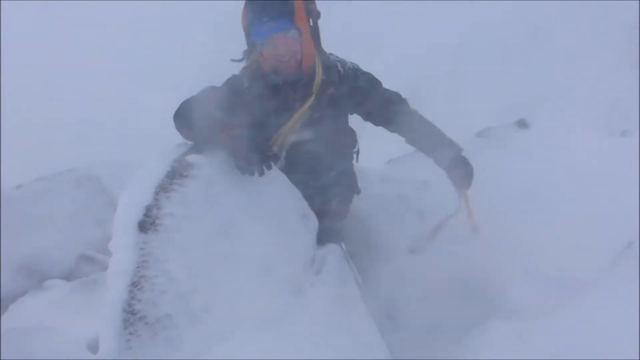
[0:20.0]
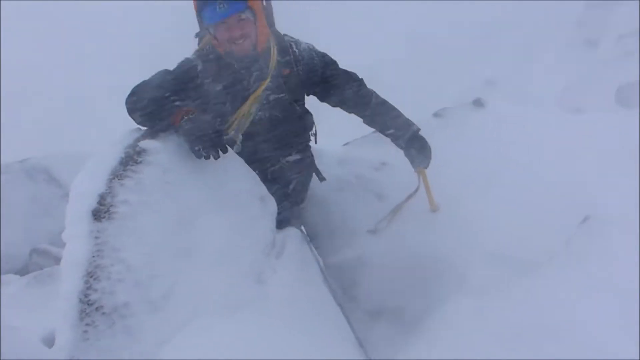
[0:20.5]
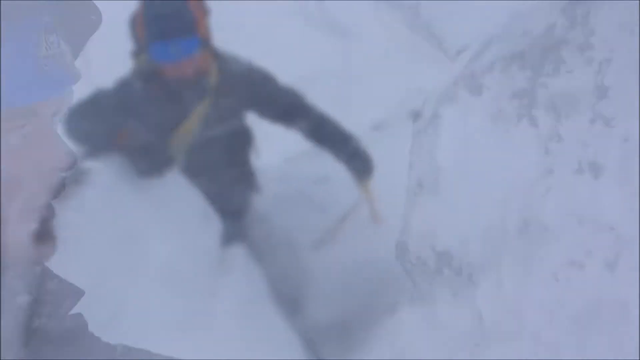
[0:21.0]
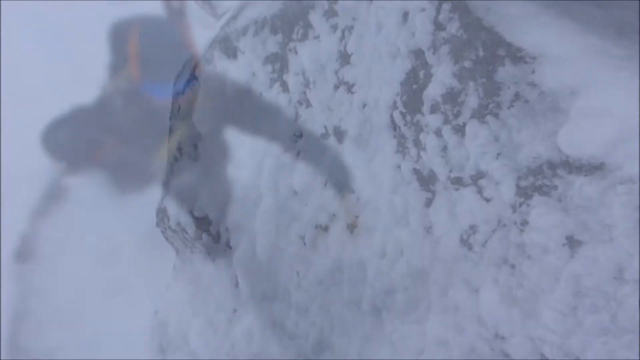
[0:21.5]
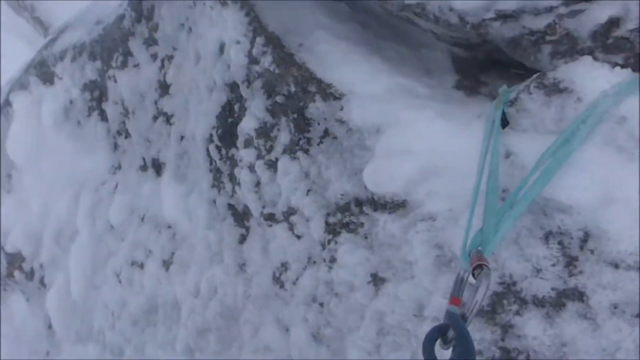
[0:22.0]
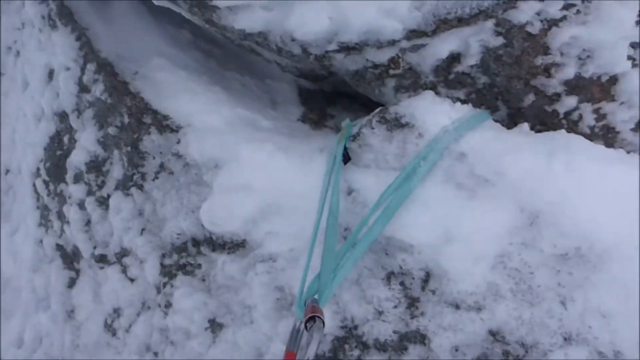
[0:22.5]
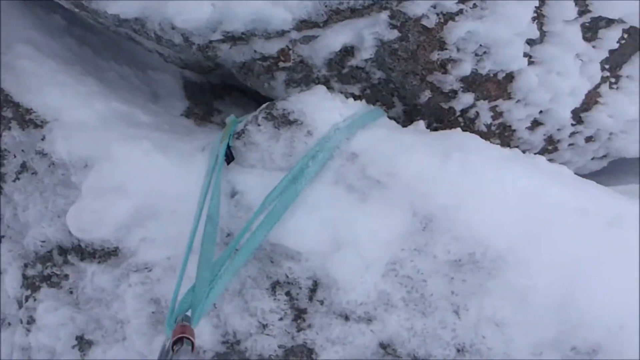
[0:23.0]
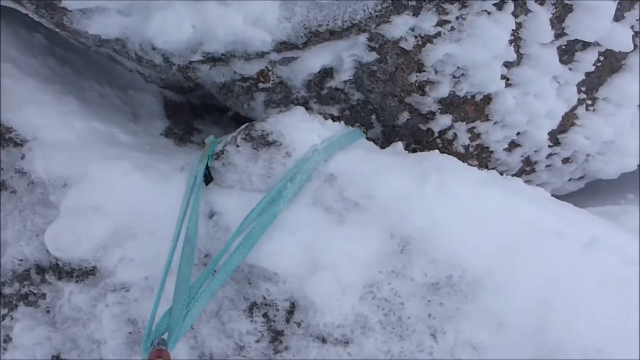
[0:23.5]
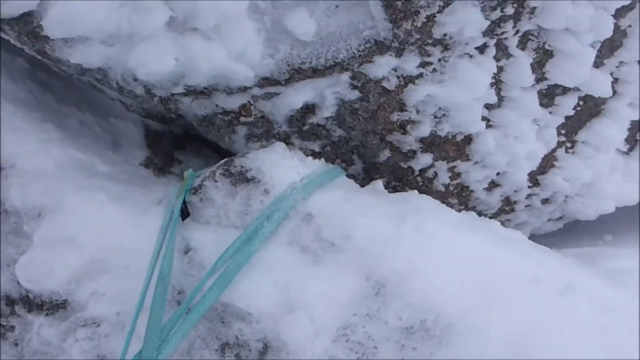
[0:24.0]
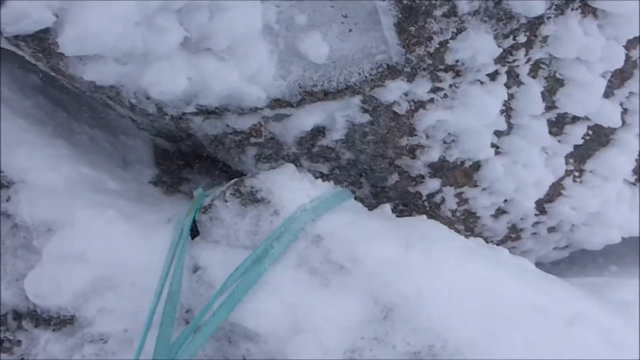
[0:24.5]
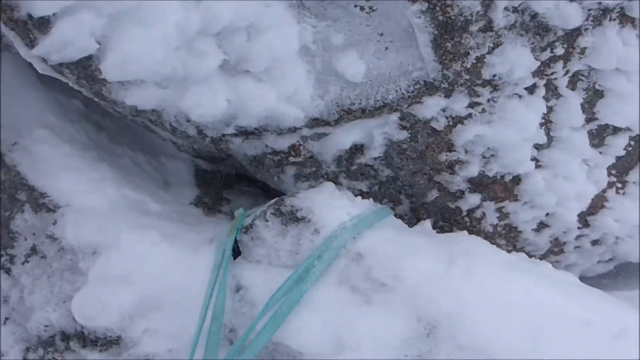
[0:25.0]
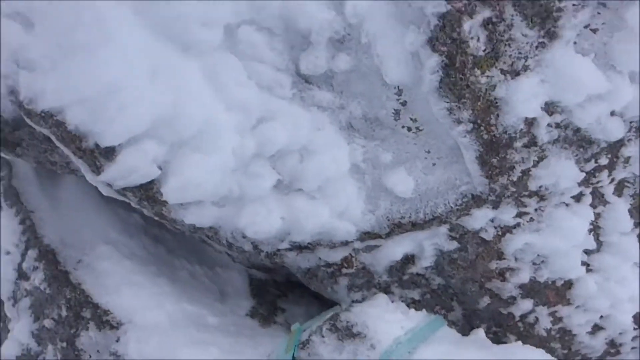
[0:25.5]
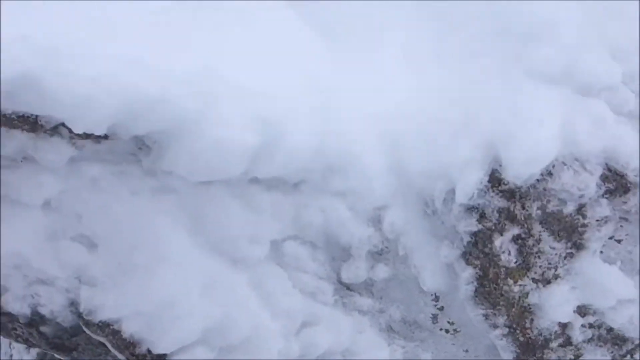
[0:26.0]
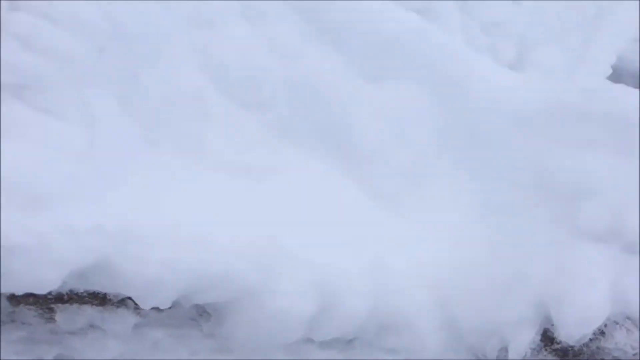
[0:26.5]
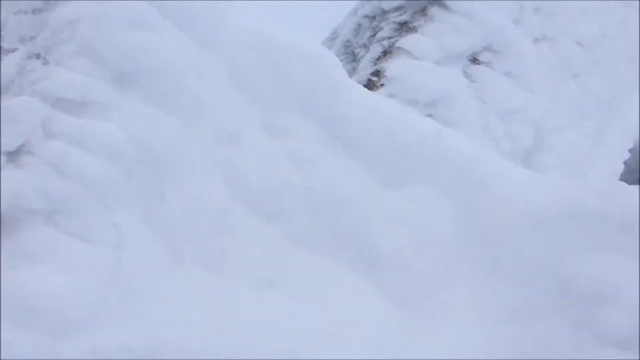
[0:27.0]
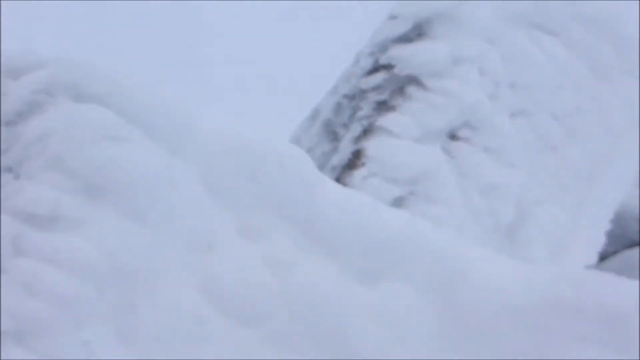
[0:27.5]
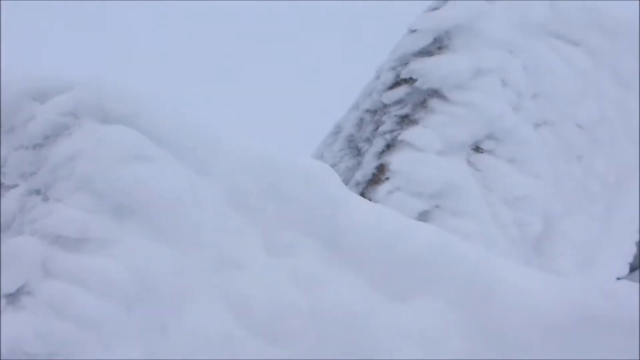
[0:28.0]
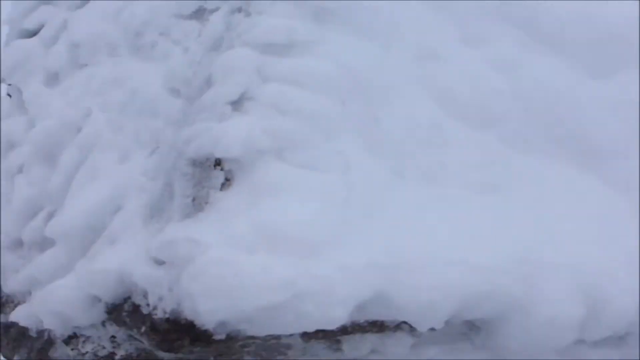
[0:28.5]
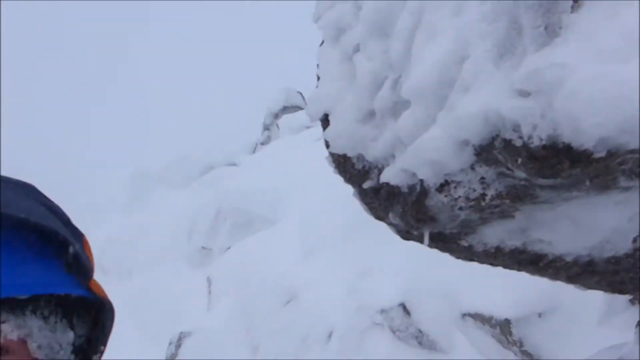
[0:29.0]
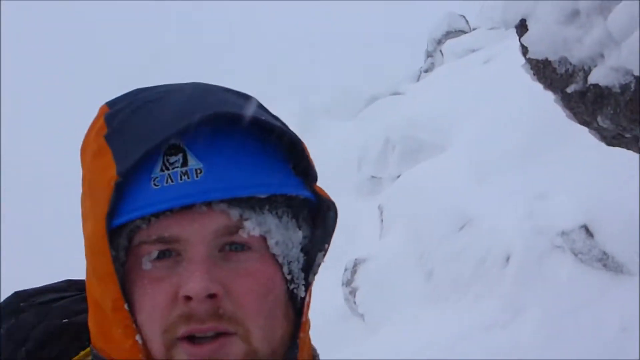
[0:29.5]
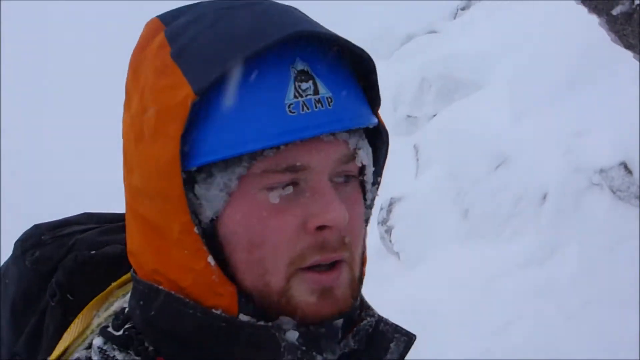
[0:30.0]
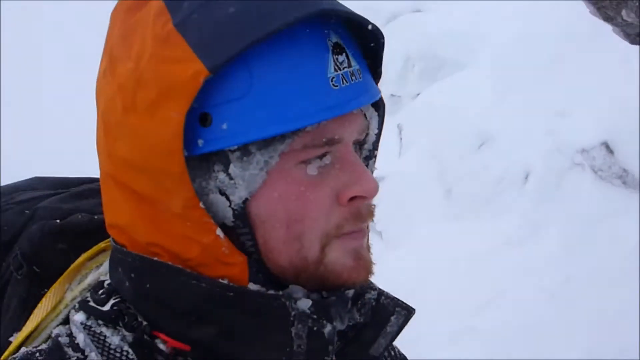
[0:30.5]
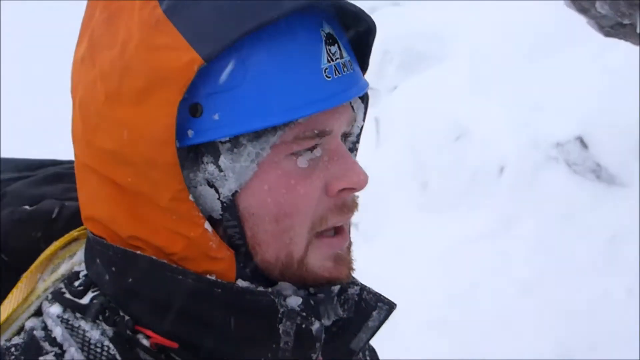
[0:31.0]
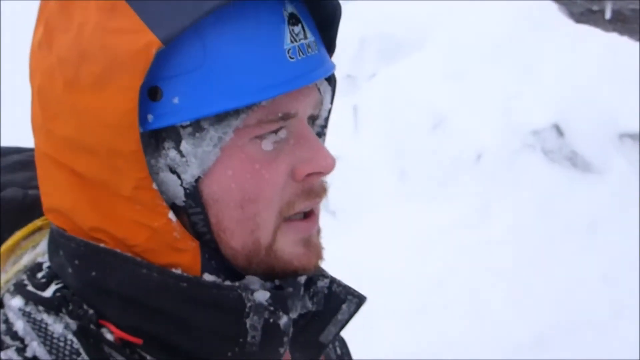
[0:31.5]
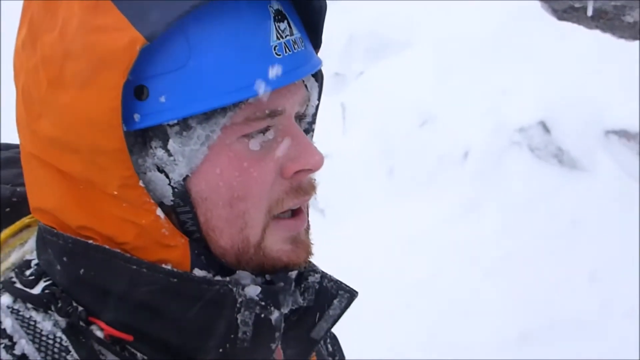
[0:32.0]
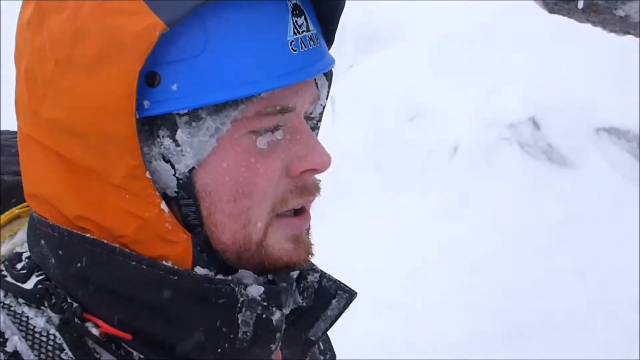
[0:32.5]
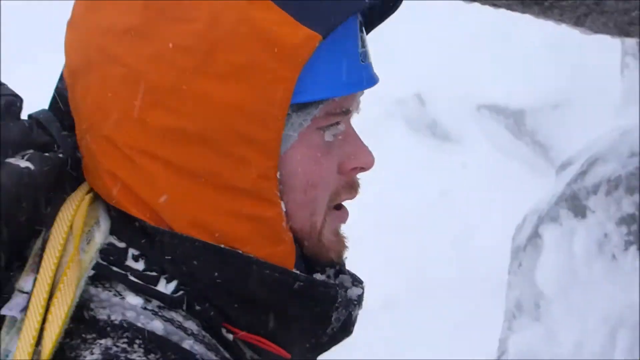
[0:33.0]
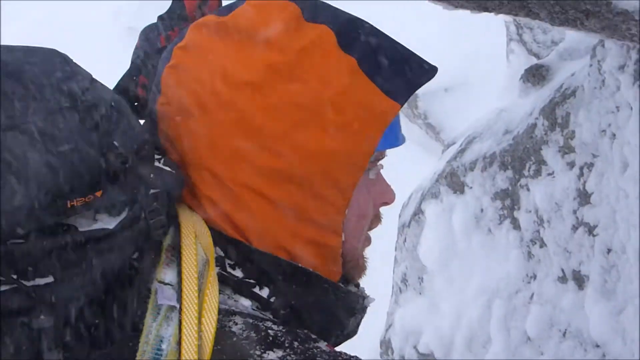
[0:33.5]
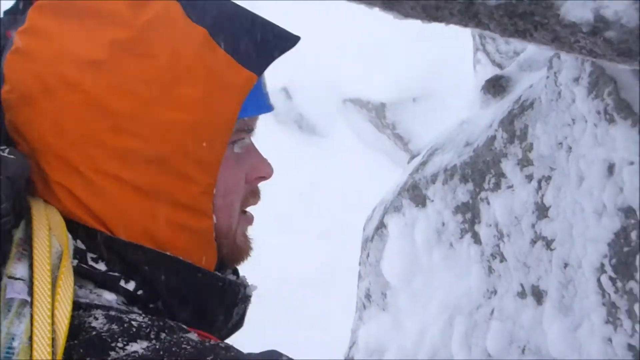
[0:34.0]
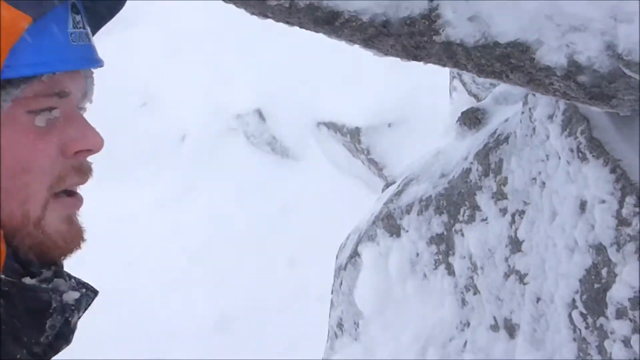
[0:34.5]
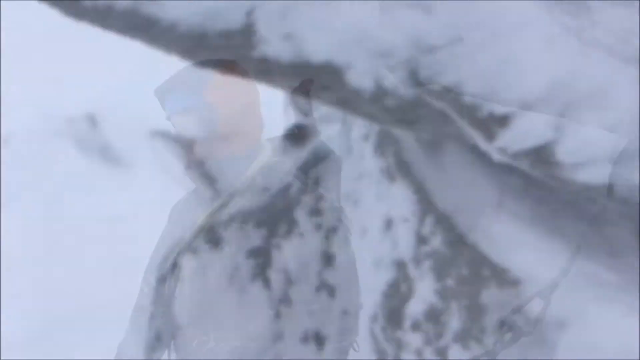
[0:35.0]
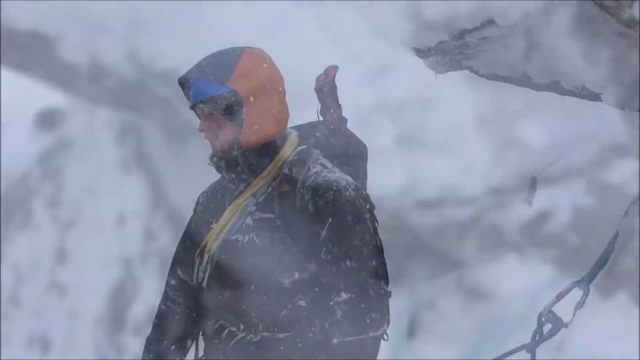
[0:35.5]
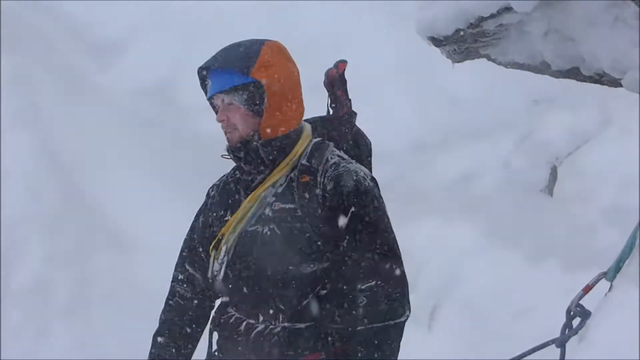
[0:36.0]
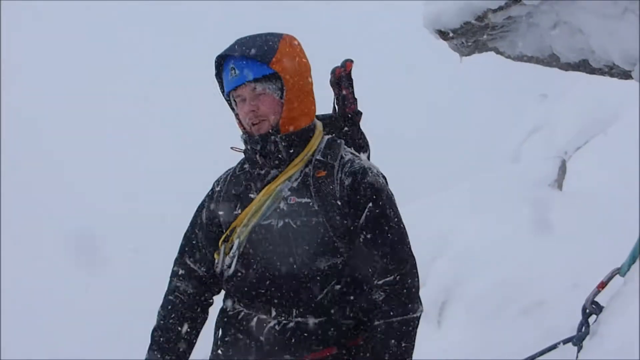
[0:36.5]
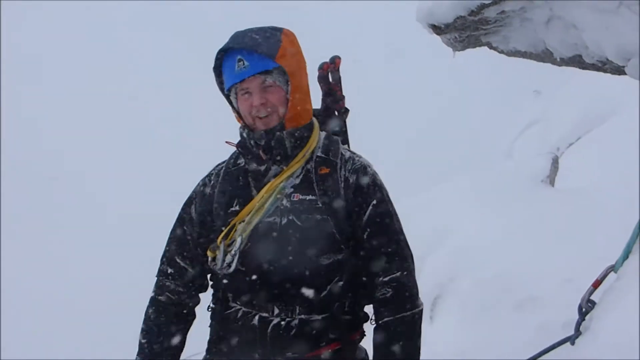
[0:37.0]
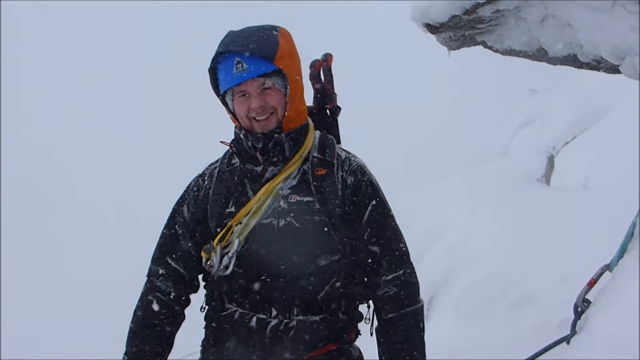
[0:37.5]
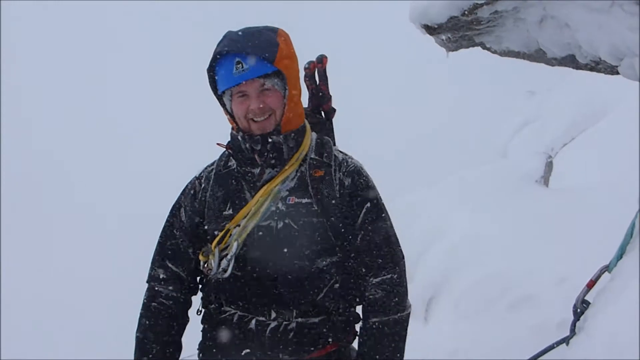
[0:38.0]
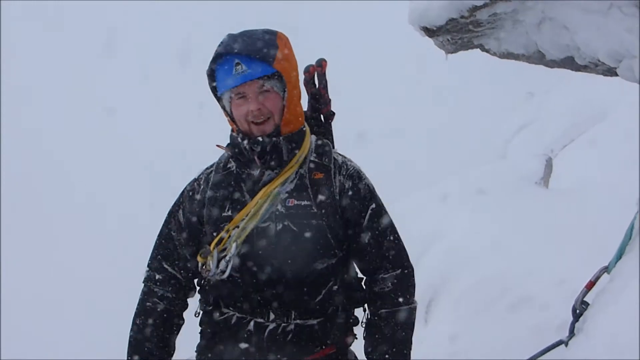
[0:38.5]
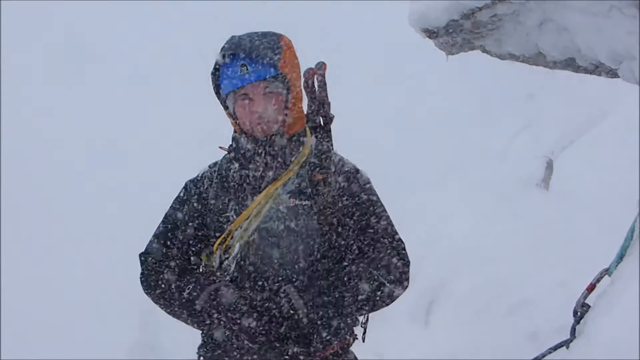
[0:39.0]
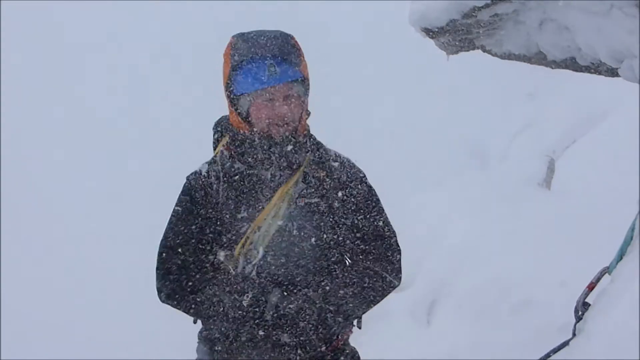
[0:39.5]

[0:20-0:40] The mountain climber looks into the camera, talking. The camera moves roughly left to right, then transitions to a very zoomed-in shot of a rock with snow on it, with a turquoise string on one part of the rock. The camera pans left to right and focuses on the teal string around that part of the rock. It then pans upward, showing more of the boulder with snow and ice on it, and then pans left to the climber. A head shot shows him from the shoulders up, looking toward the right. He has what looks like a blue hat under his hood, and there are icicles on his eyelids. He leans over toward the right. The camera then zooms out to show him from the waist up, looking at the camera, speaking and smiling a little. Snow and sleet still come down around him.